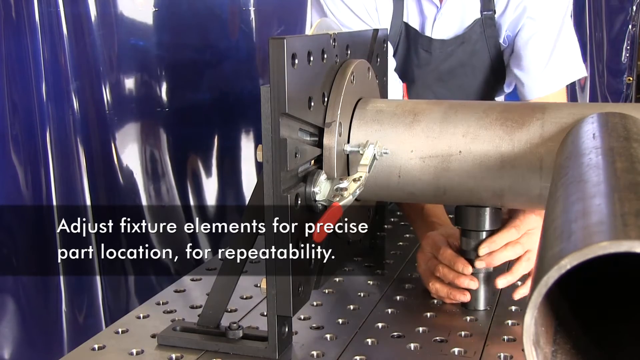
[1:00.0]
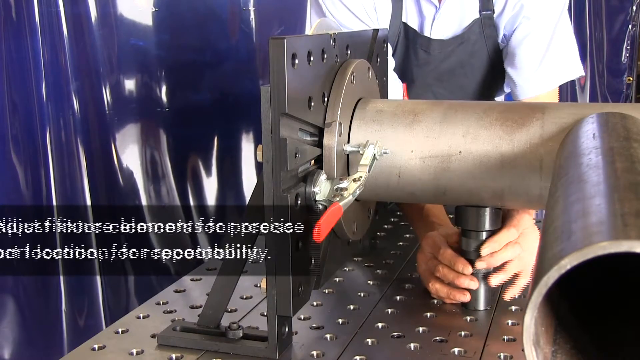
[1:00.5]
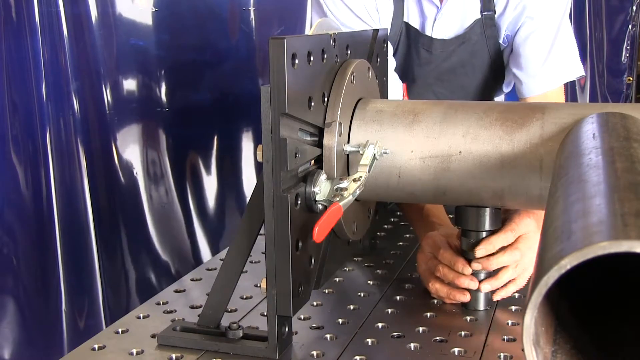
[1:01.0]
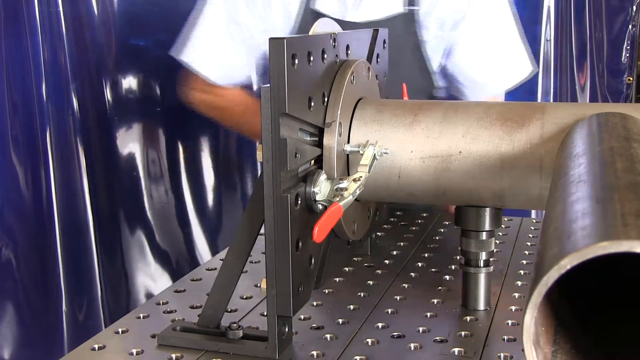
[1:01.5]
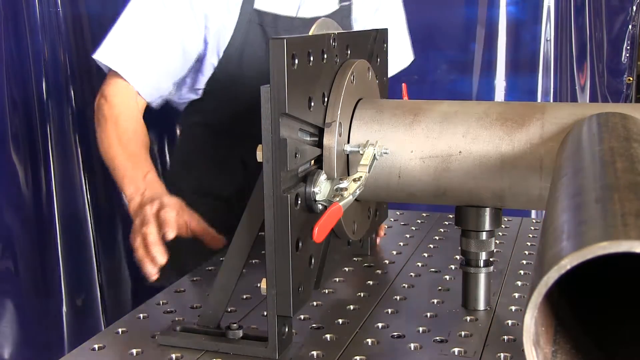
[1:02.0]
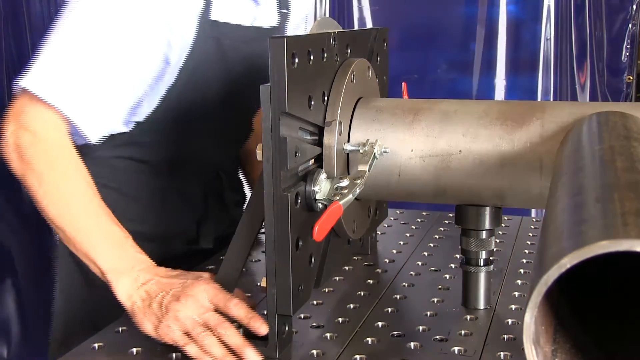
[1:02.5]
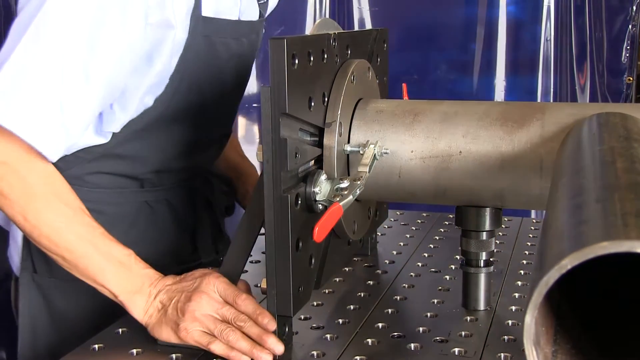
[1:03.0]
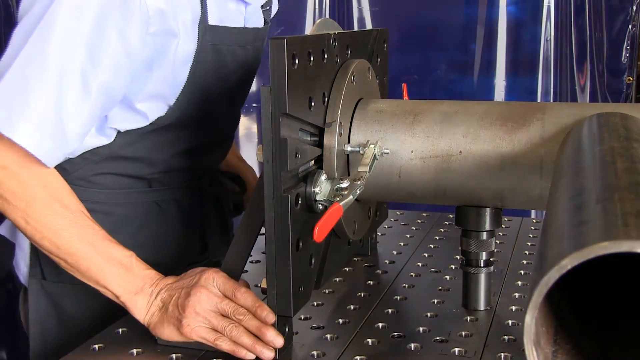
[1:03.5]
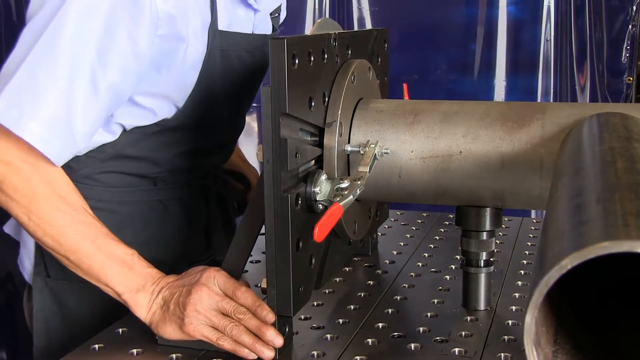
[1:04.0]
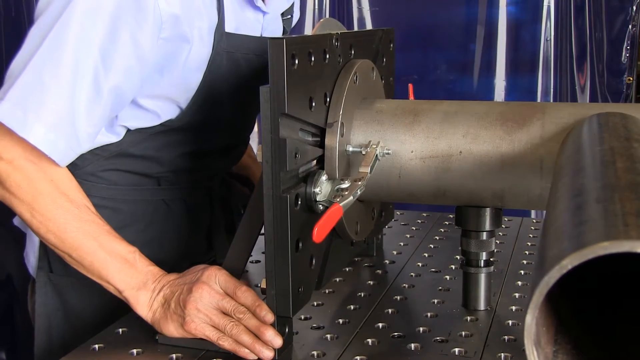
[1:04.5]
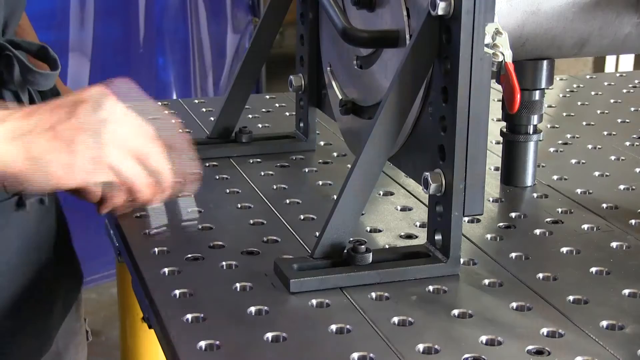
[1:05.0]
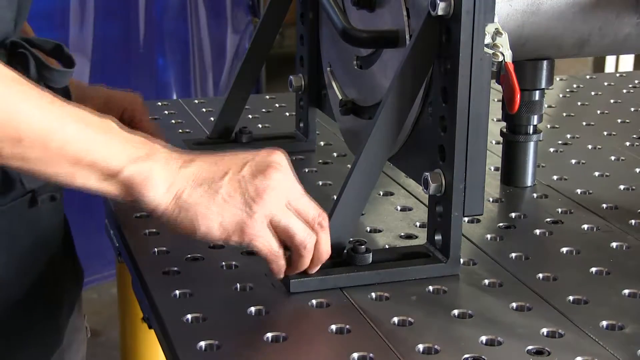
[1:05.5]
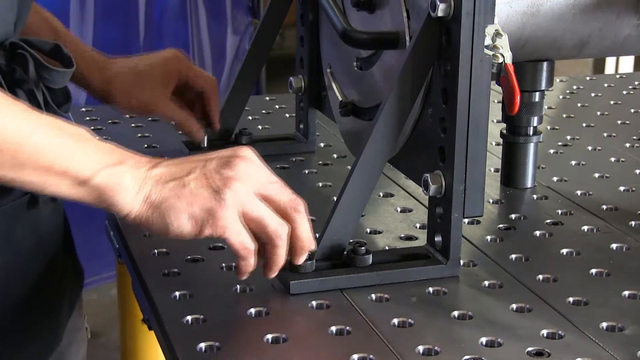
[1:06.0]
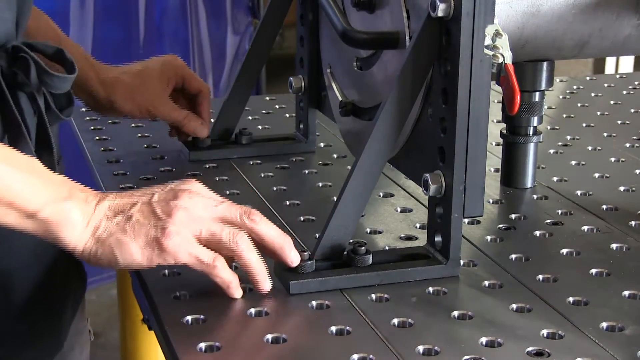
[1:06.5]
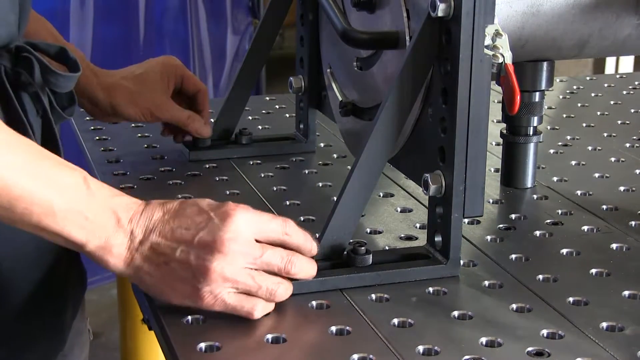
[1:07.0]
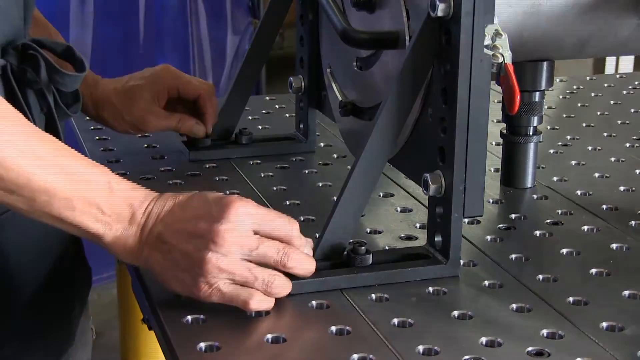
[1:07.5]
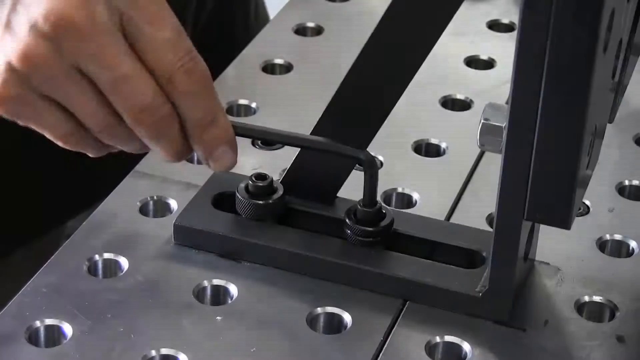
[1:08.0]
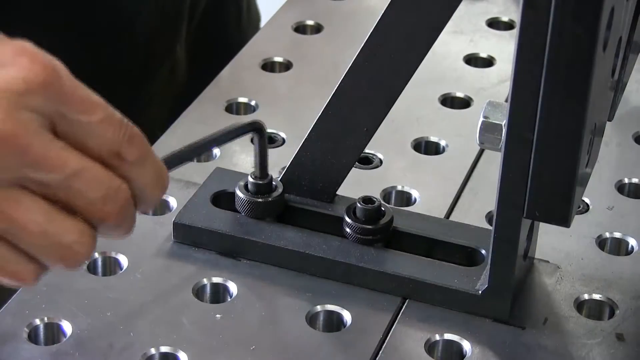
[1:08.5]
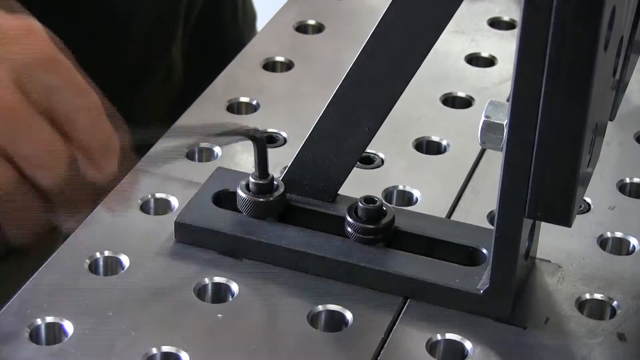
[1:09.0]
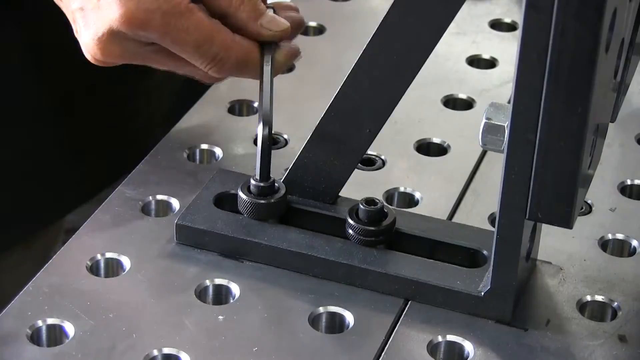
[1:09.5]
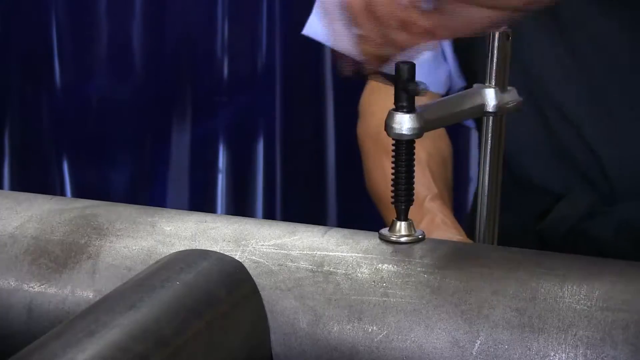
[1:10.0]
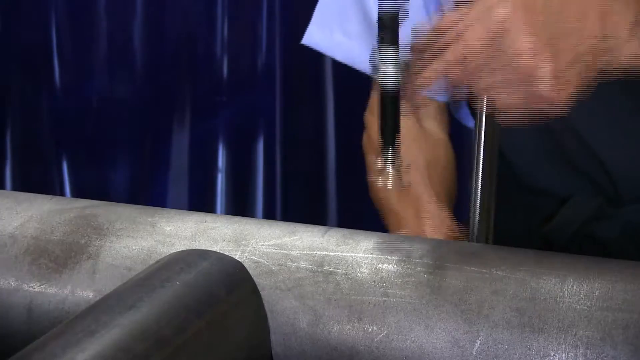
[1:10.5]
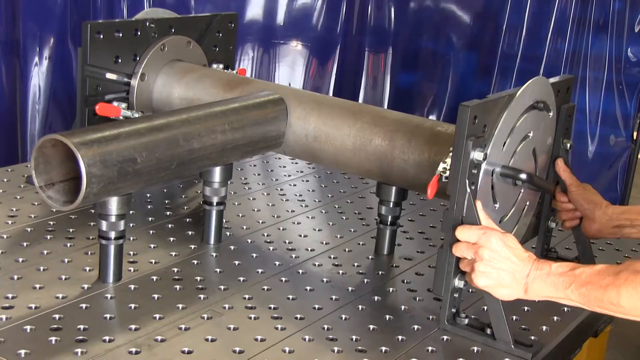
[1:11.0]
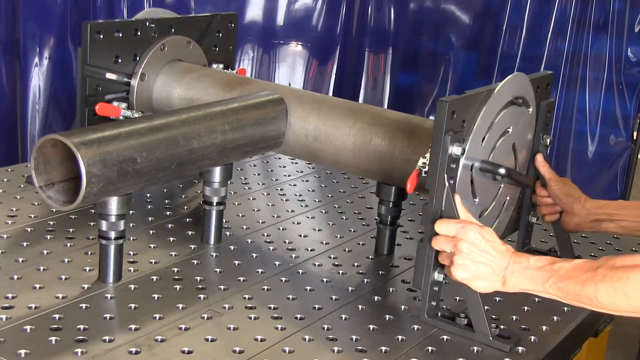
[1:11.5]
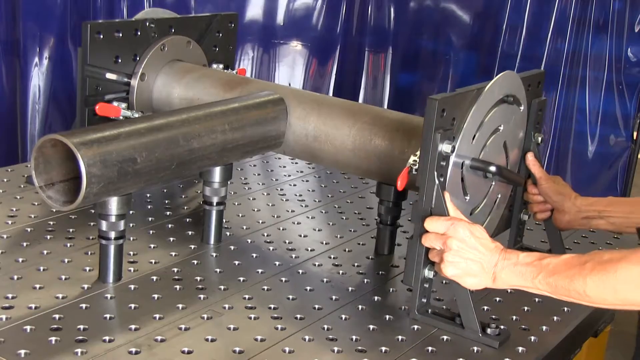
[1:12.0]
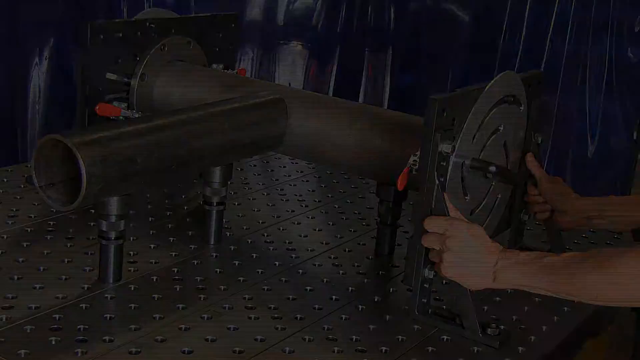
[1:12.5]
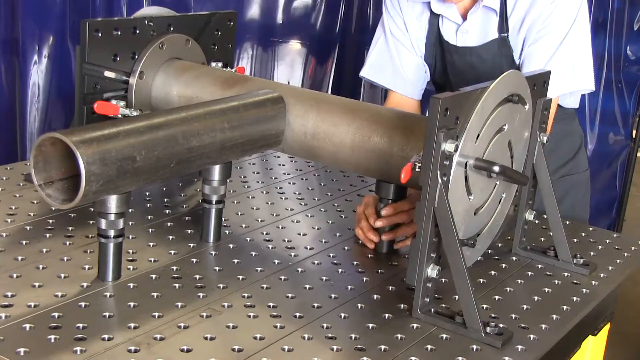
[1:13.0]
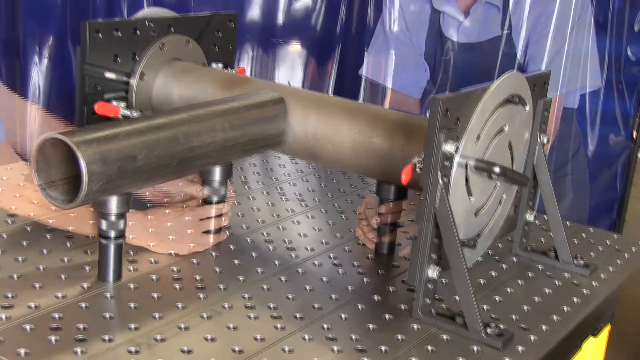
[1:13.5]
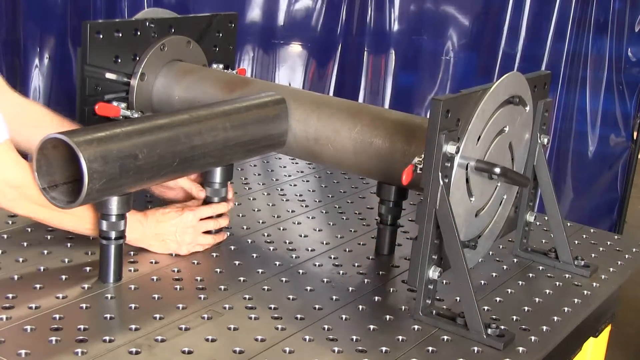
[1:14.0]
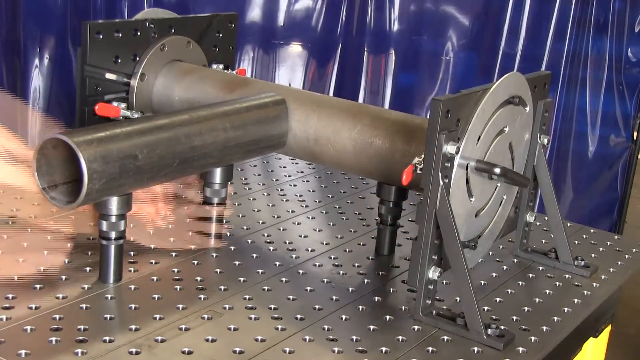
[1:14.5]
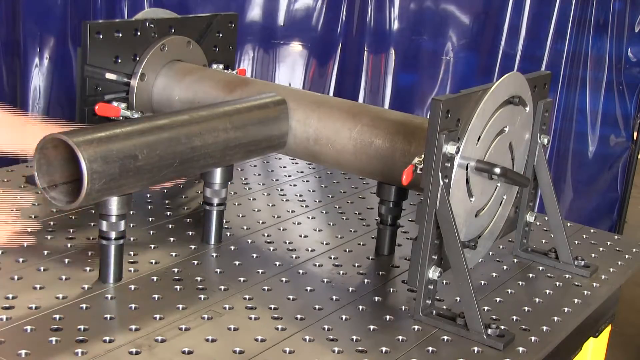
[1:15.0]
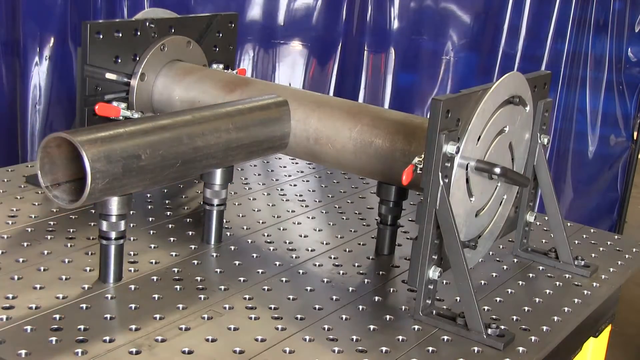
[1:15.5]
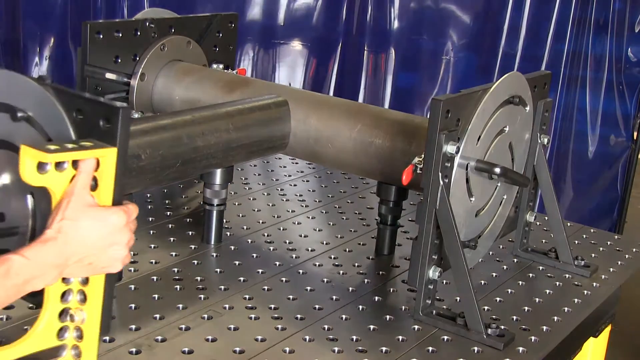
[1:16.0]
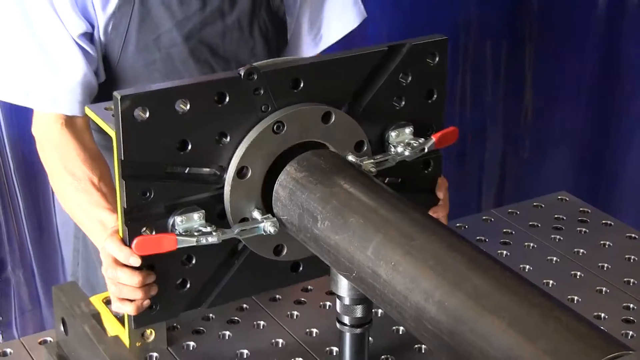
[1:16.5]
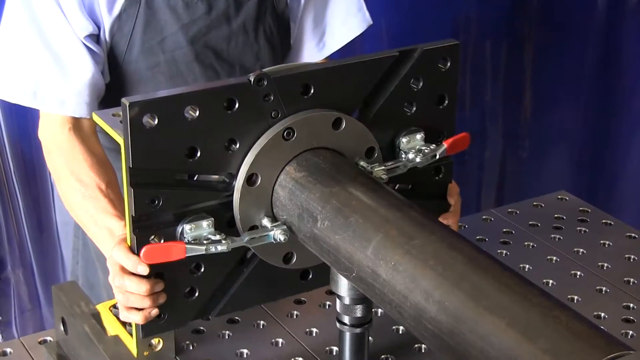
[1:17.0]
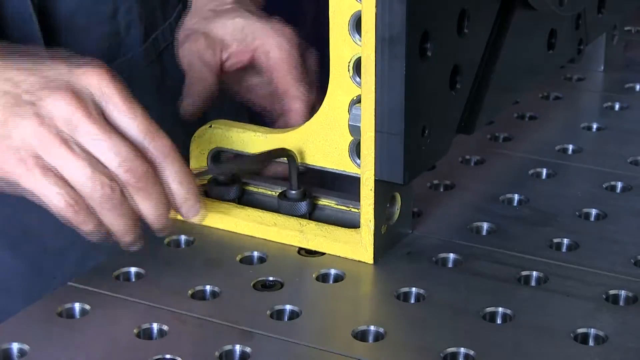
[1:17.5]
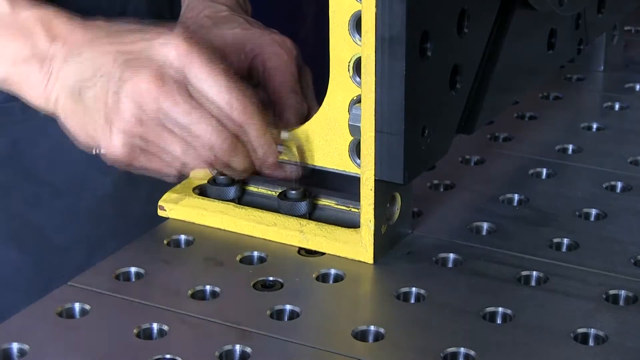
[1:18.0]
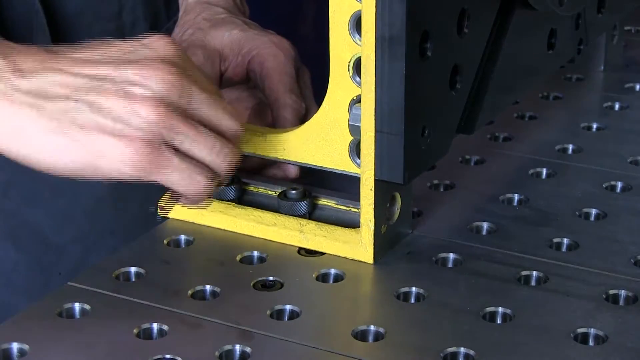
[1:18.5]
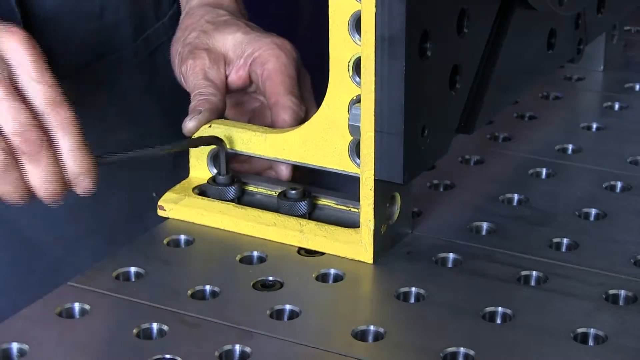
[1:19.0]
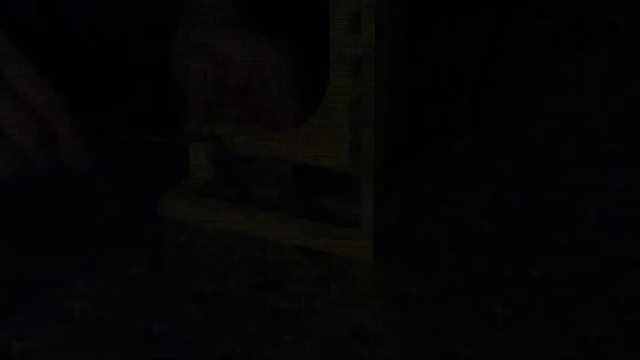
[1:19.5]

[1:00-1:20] The person adjusts the small pipe laid under the original silver pipe for extra support. Using both right and left hands, they adjust the support in the table that holds the round circle added to the end of the pipe. They adjust the screws and lug nuts with an Allen wrench, then use a tool with a handle that kind of turns around to adjust the pipe fixings. They put another circle on the other side; it has a black handle and is on a support that is screwed onto the table as well, so both ends are the same. They add two more smaller pipes as supports under the second pipe of the T and adjust all the nuts with an Allen wrench.